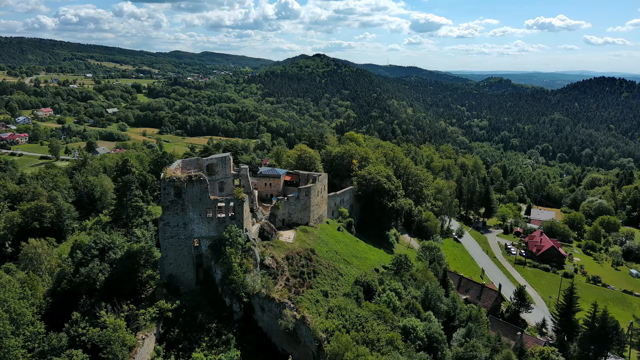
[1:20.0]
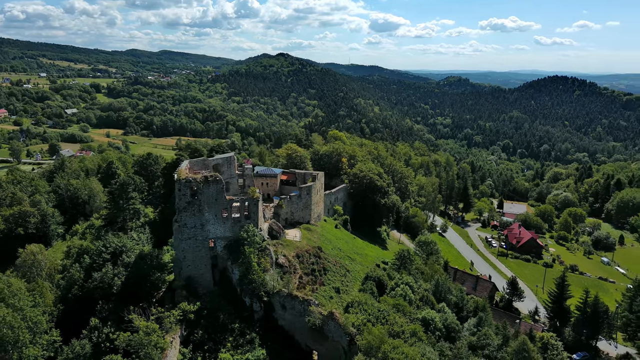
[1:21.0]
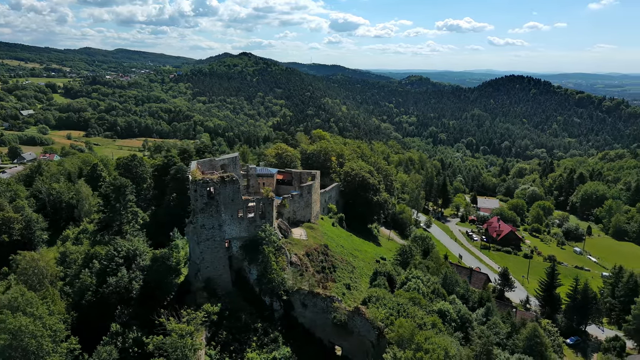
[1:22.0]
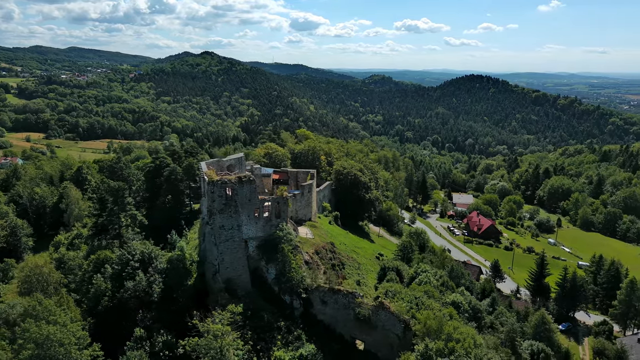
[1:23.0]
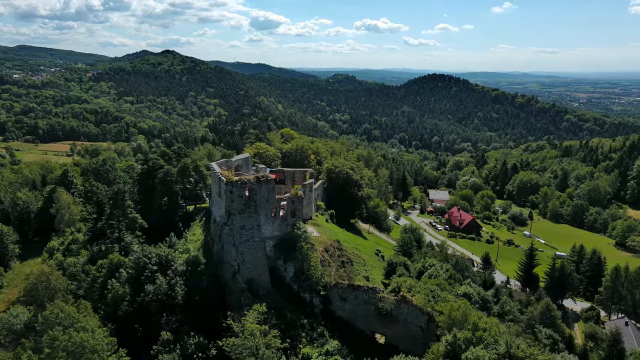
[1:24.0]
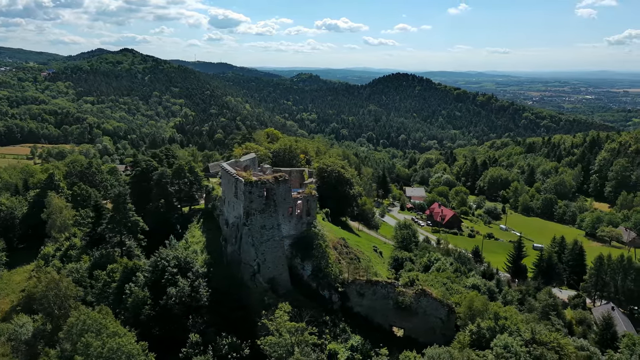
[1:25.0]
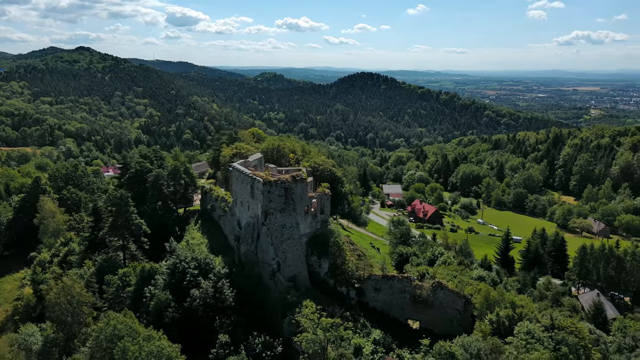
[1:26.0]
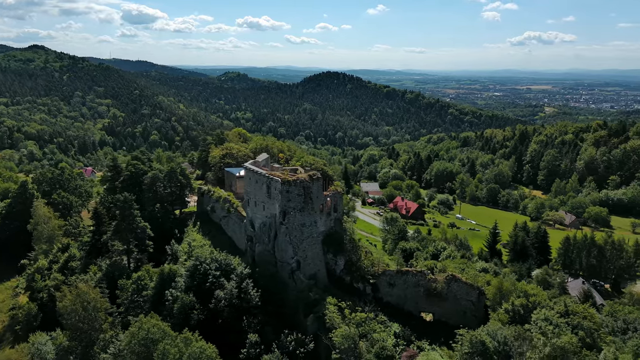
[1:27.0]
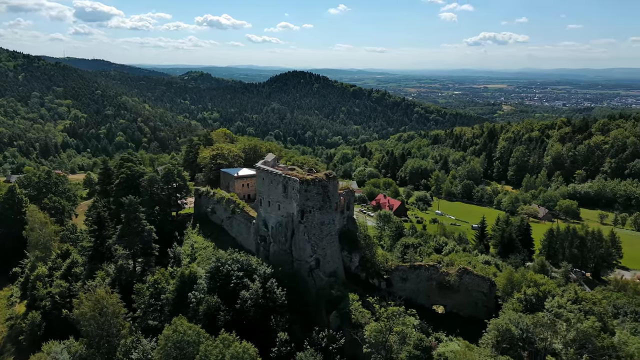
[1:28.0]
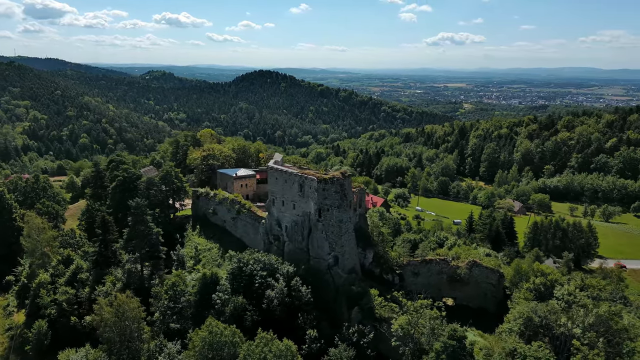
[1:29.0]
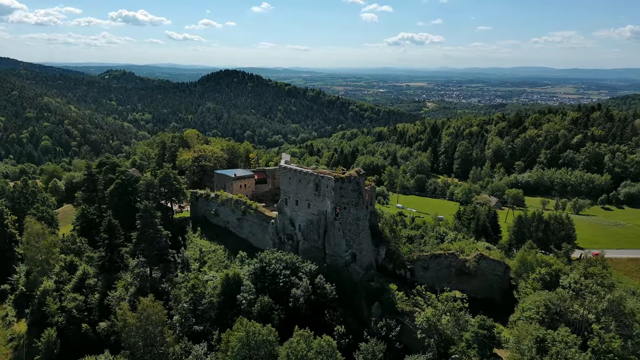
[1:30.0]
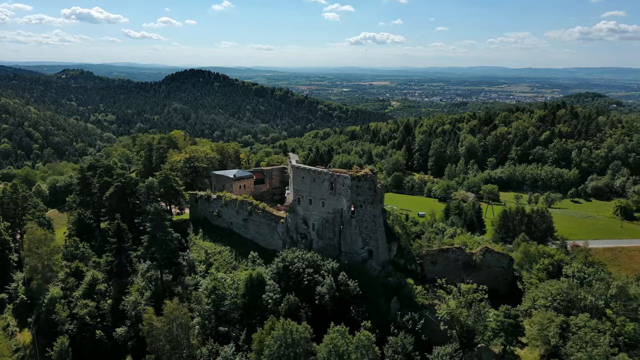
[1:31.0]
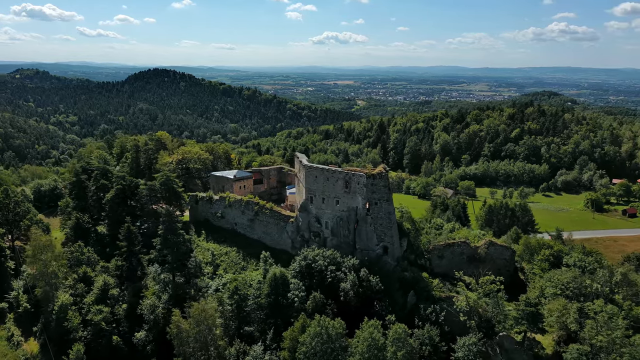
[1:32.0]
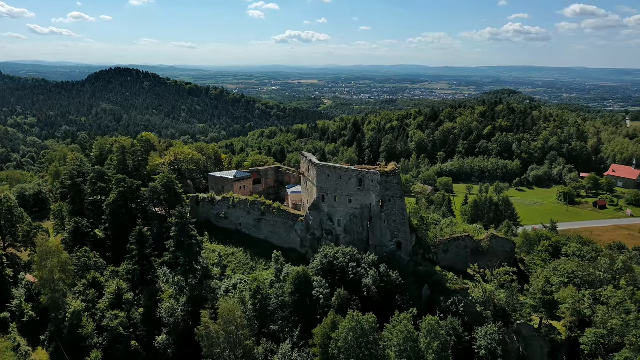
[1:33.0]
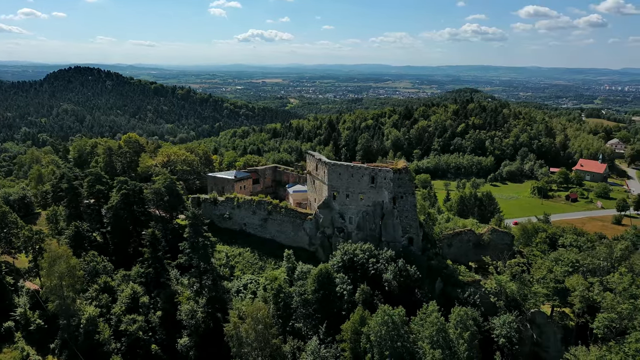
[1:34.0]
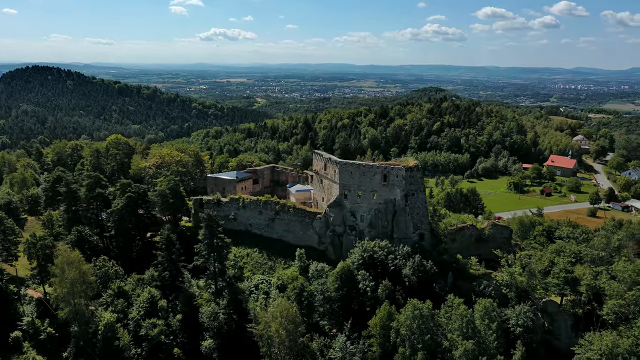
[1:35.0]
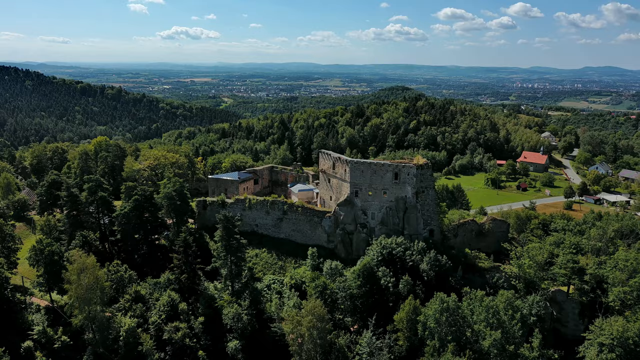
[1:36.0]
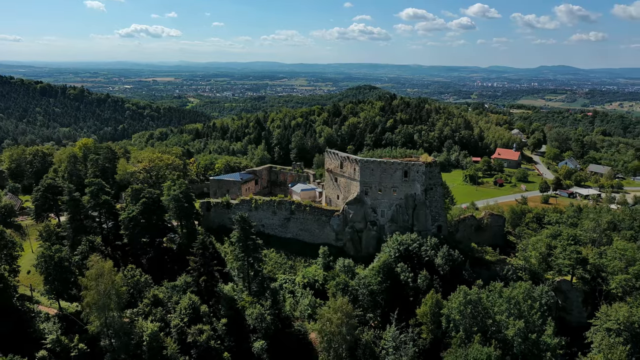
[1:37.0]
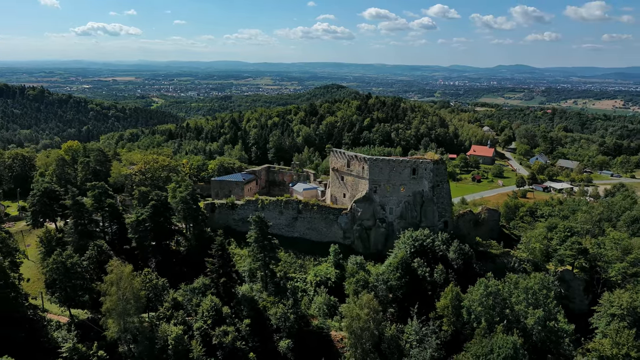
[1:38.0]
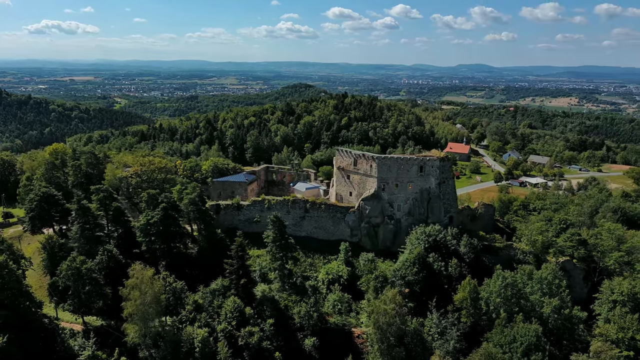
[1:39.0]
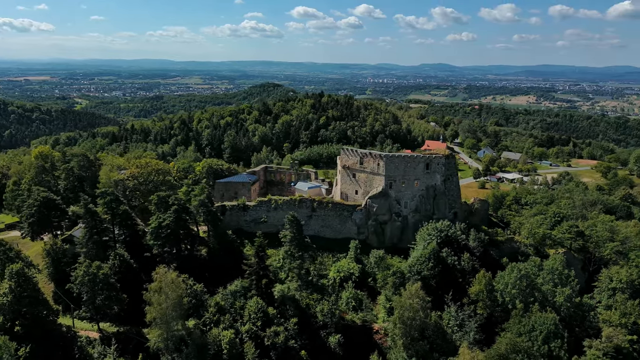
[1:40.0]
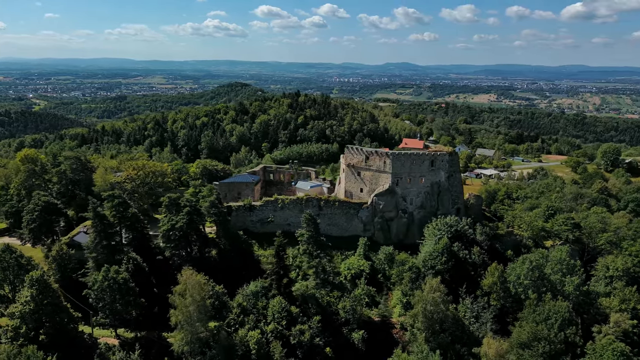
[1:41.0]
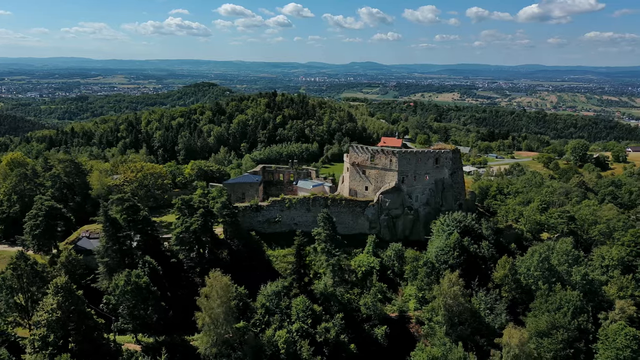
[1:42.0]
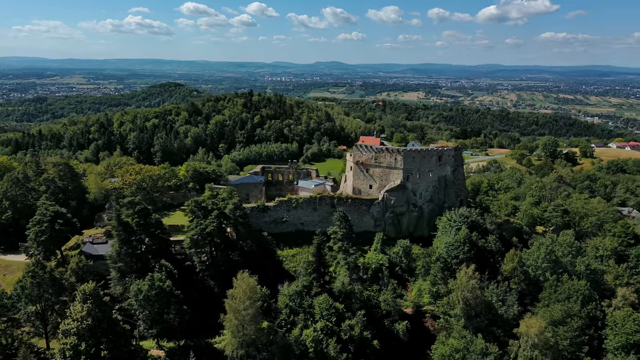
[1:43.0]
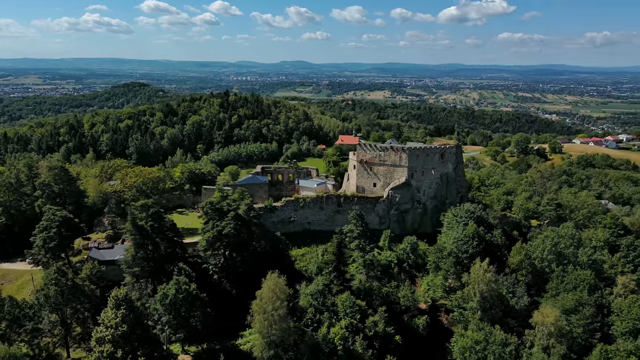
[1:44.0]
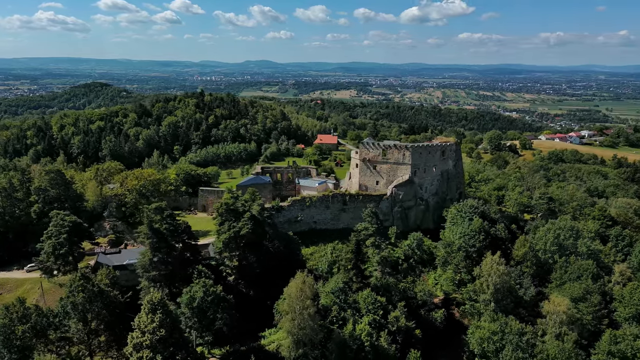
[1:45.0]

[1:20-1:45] The daylight aerial view continues over the very ancient structure, which appears to be a fort set on a hill. Part of the structure is missing, possibly from age or from walls collapsing. The surrounding area has trees, valleys, hills and green grass.